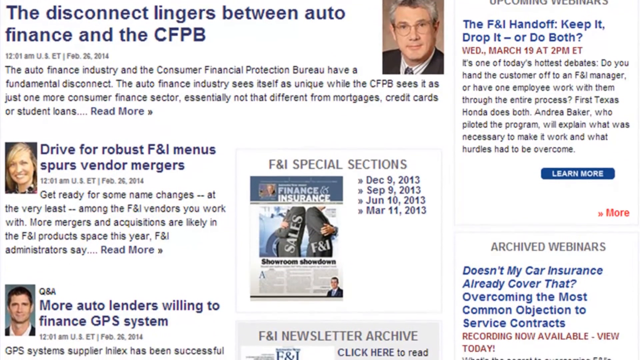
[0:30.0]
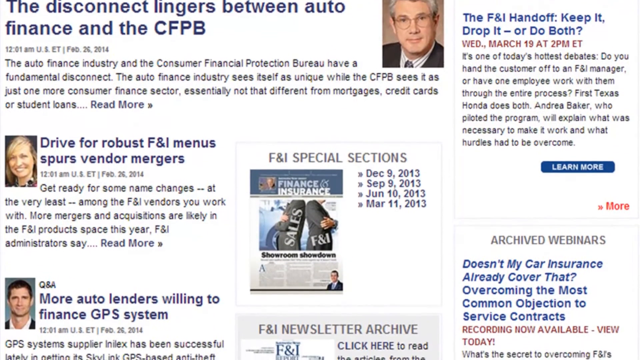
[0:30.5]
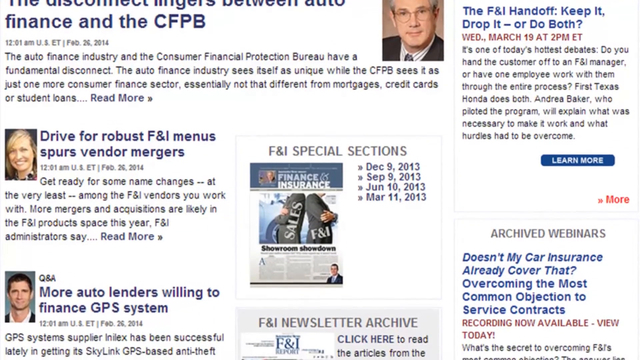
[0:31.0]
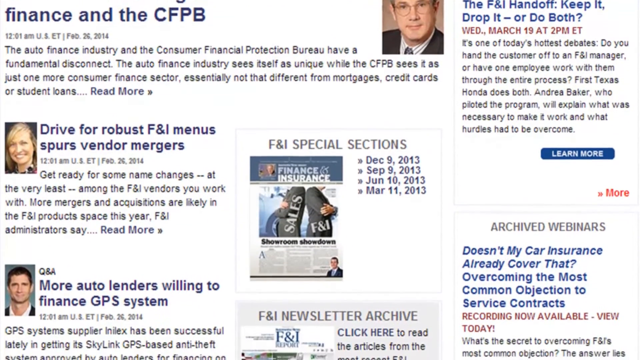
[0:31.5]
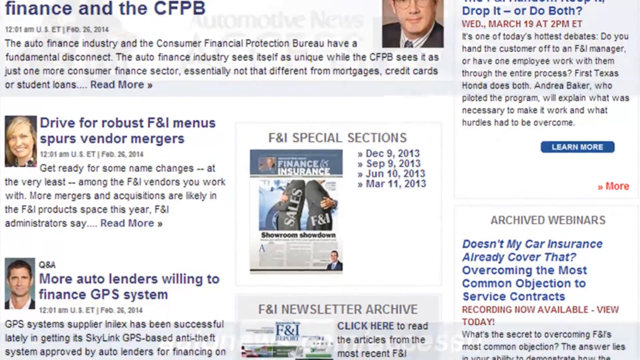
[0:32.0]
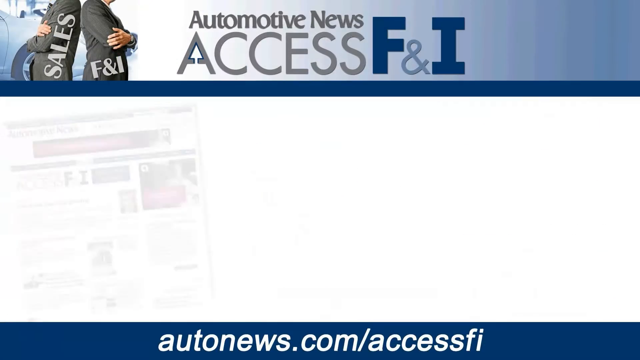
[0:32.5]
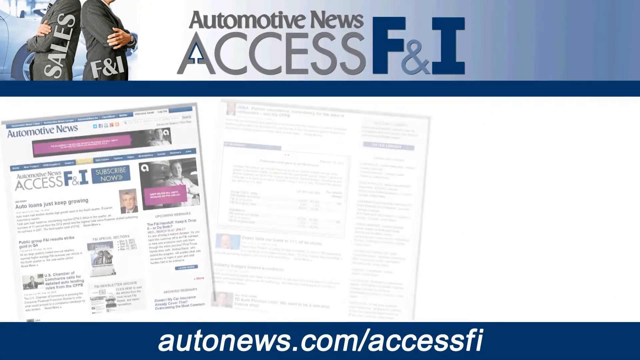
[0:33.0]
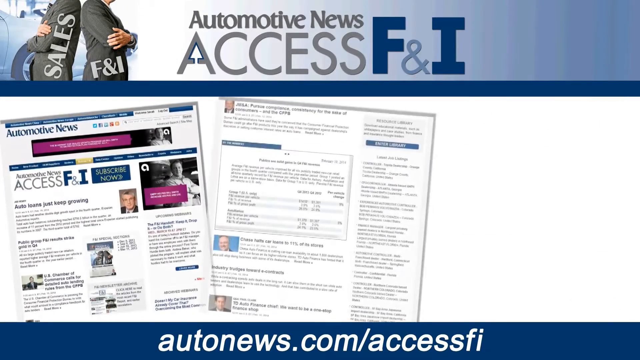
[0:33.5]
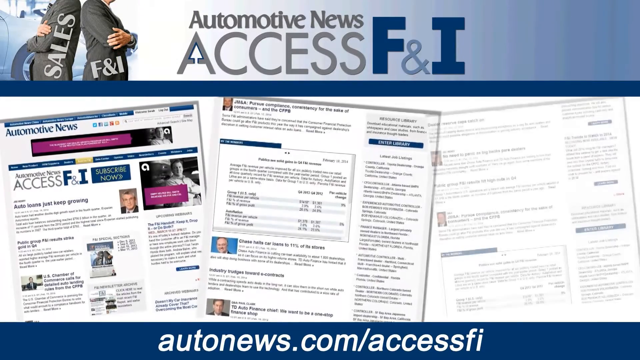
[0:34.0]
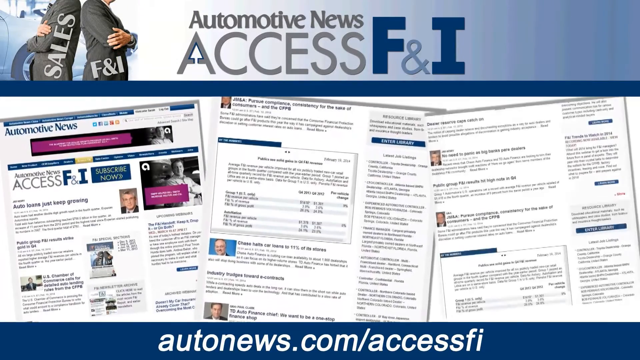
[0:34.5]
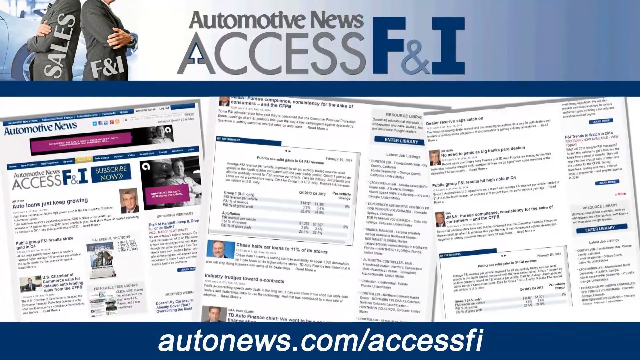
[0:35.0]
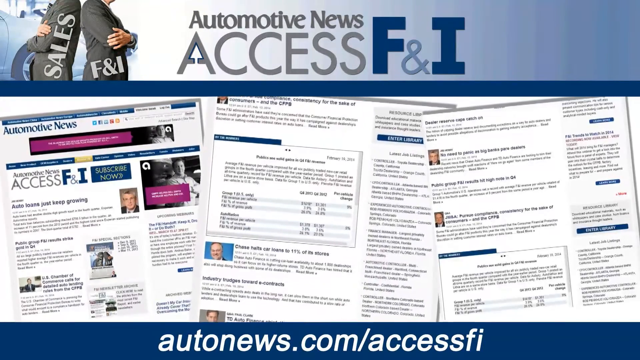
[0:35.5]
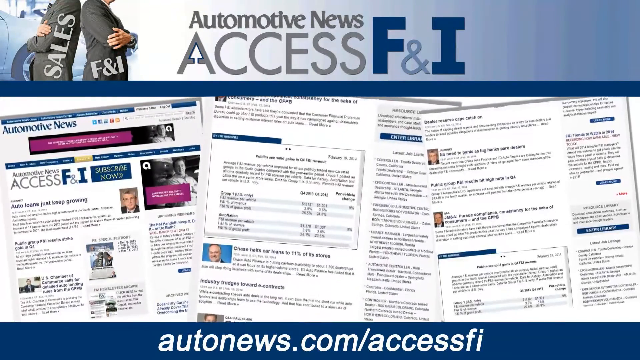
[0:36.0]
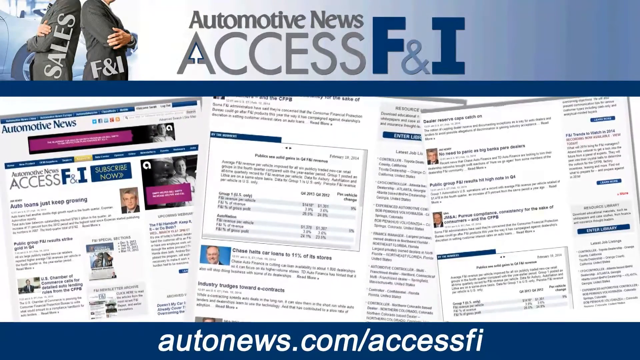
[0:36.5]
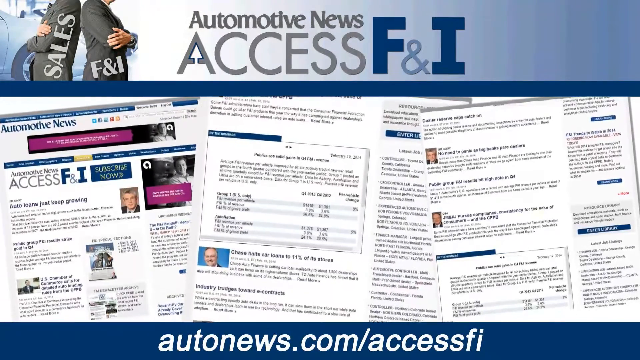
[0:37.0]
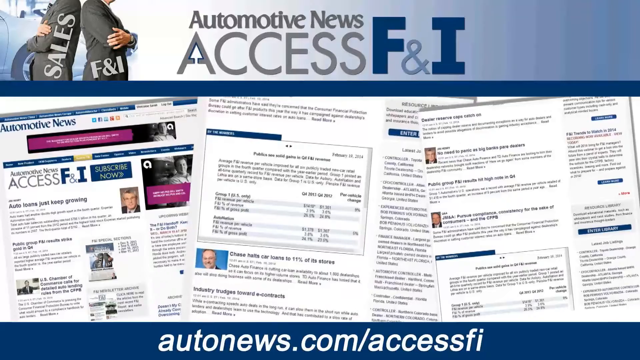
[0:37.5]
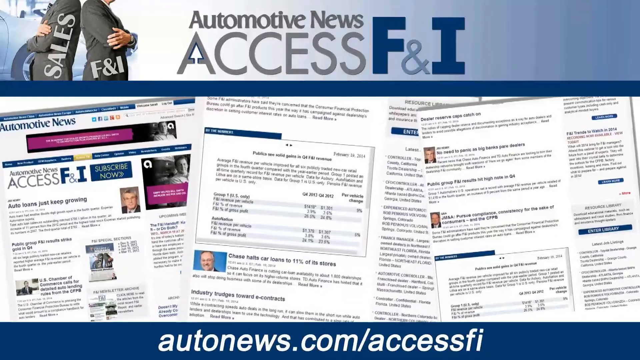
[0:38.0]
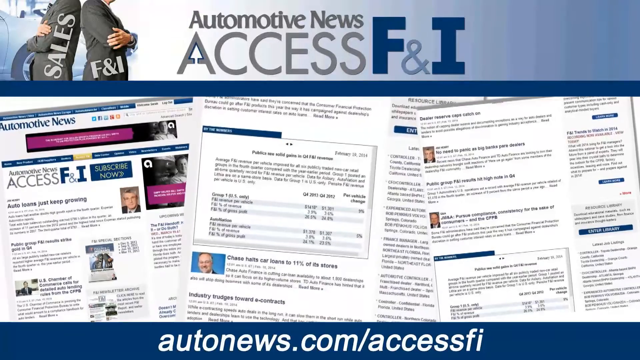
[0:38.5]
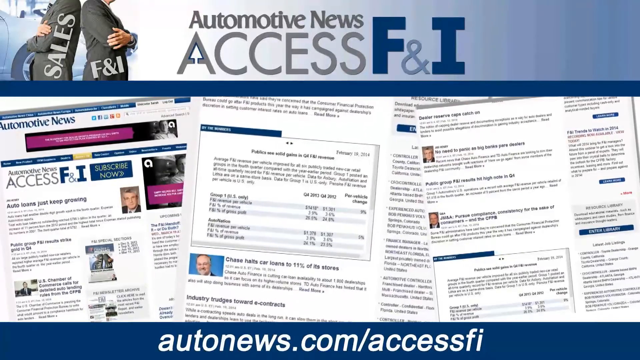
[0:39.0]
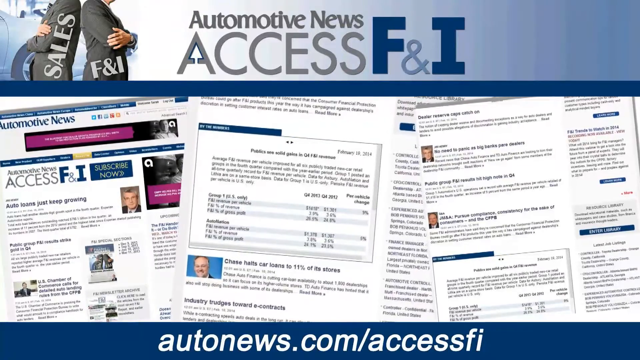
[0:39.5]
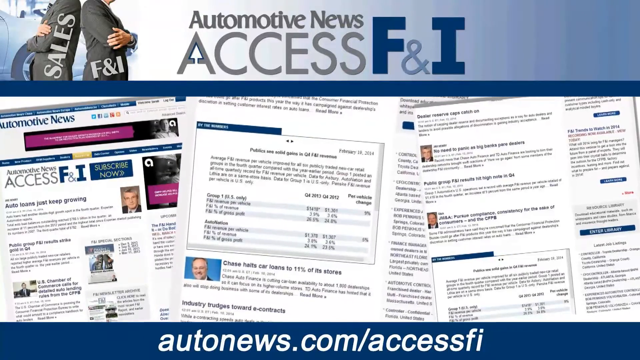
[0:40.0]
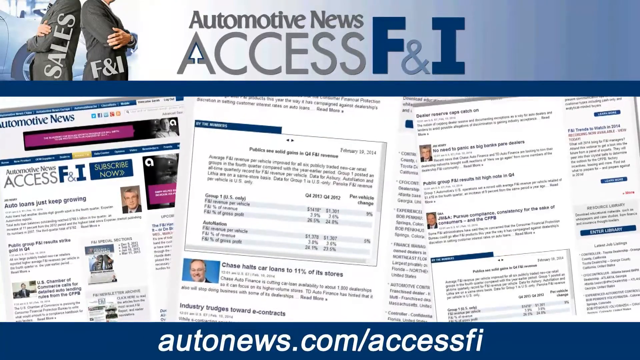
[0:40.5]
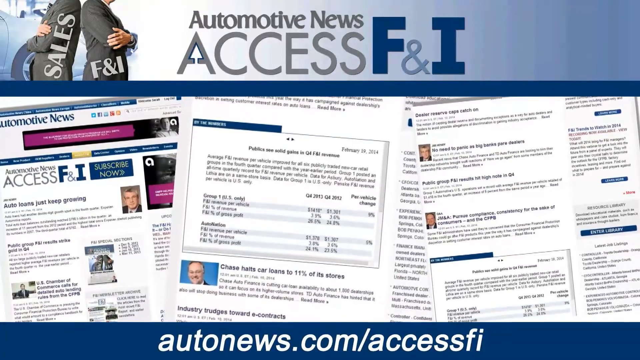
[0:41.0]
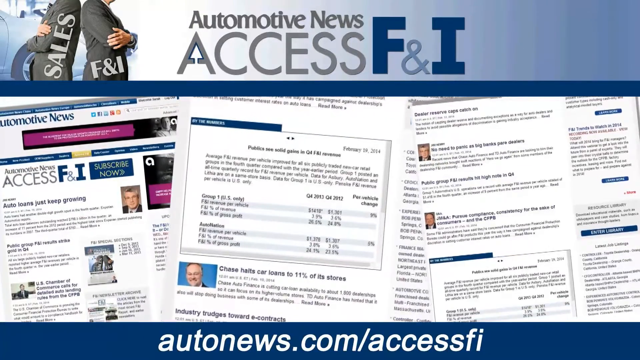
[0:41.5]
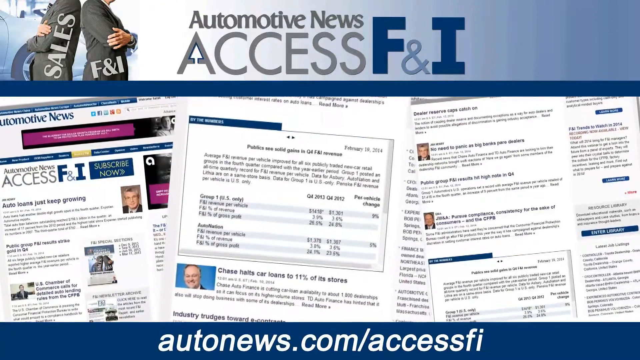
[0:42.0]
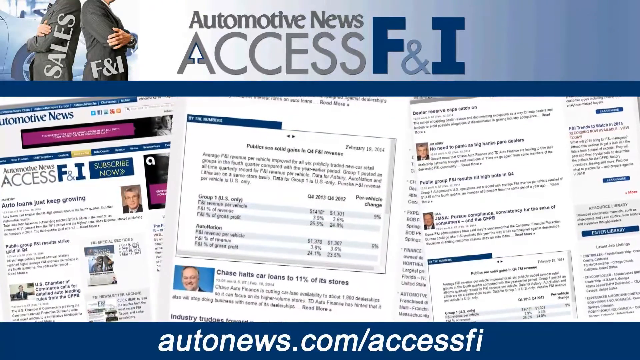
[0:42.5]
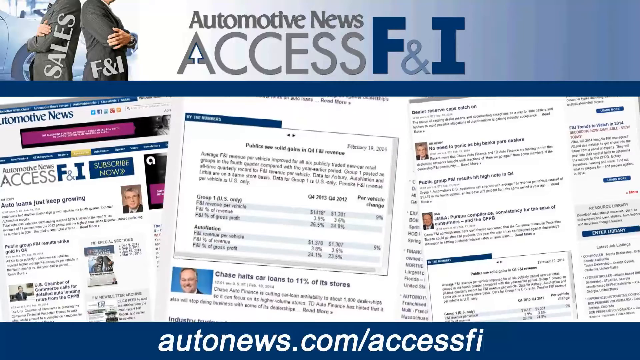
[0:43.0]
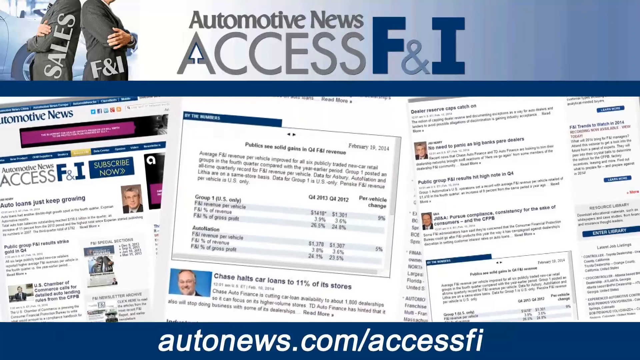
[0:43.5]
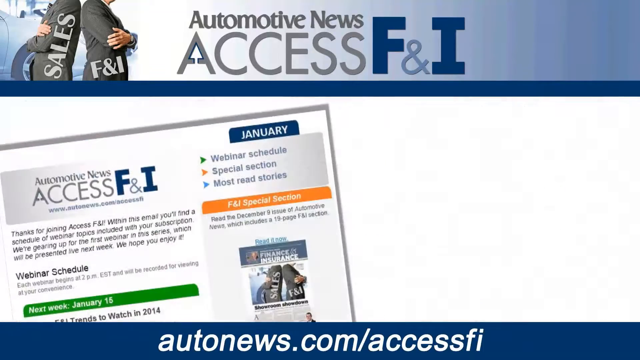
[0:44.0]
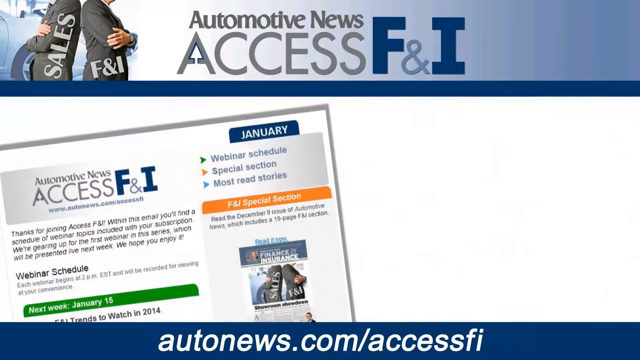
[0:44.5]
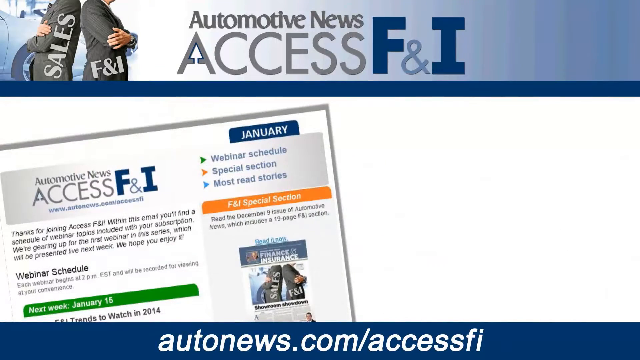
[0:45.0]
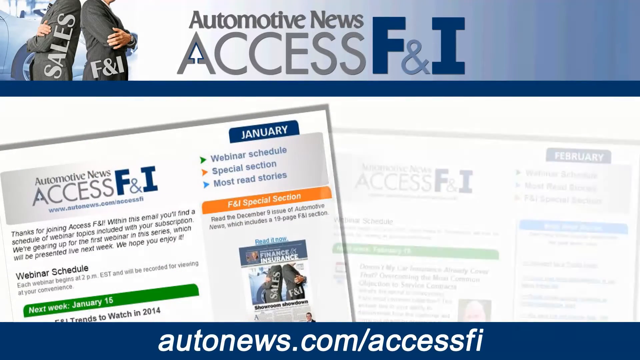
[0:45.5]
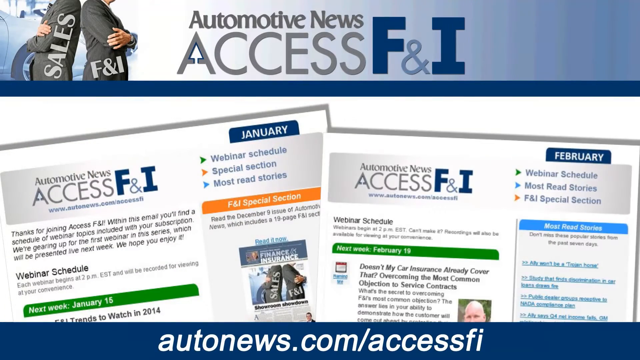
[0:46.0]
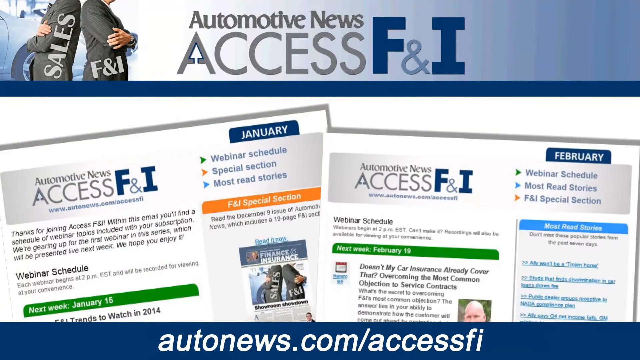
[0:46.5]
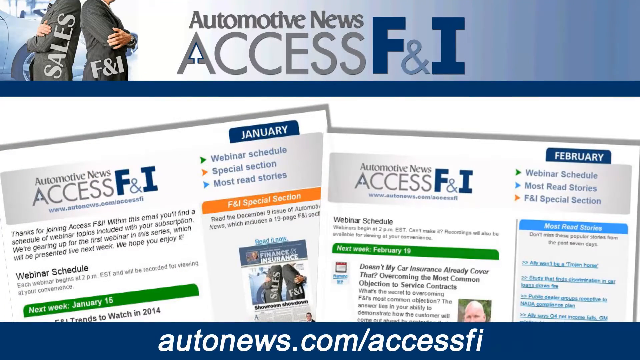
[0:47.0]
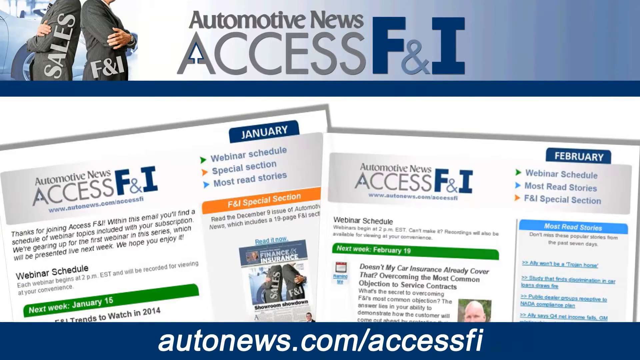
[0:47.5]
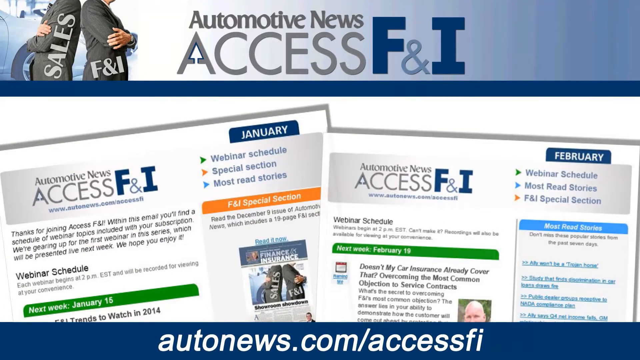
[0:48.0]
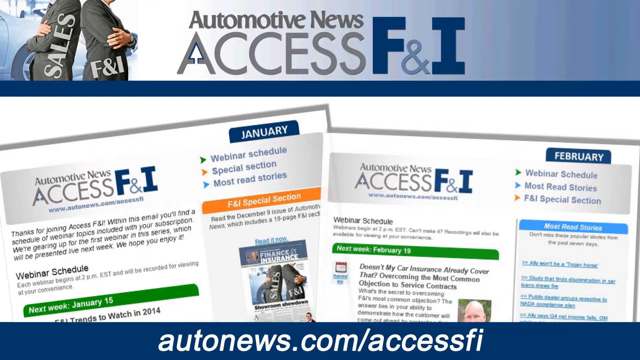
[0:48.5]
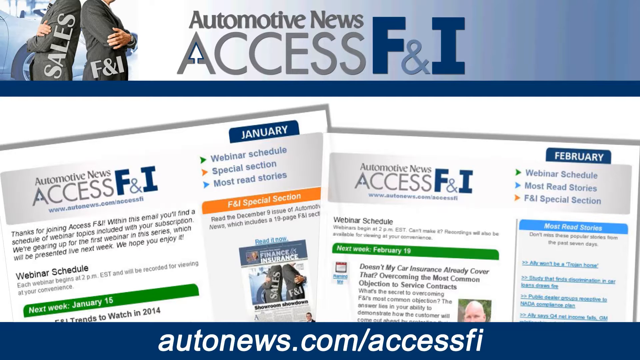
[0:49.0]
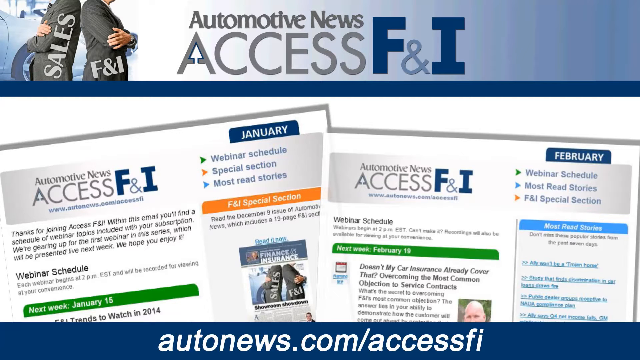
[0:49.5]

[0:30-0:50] The website has scrolled up, revealing other article listings. One article is titled "Drive for Robust F&I Menus Spurs Vendor Mergers," and its intro reads "get ready for some name changes, at the very least, among the F&I vendors you work with. More mergers and acquisitions are likely in the F&I product space this year, F&I administrators say," followed by a read more link. The web page has a mostly white background, with article titles in blue and introductory text in black. Each article has a clip art or avatar image of its author.